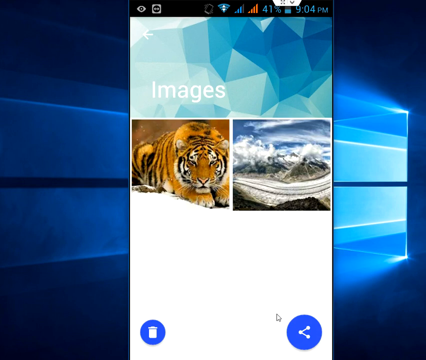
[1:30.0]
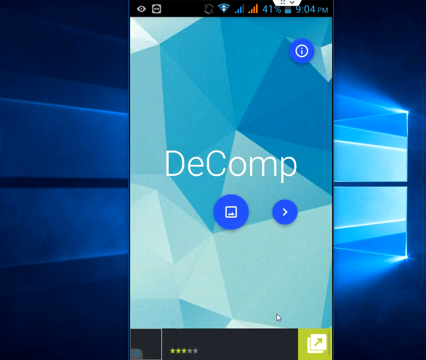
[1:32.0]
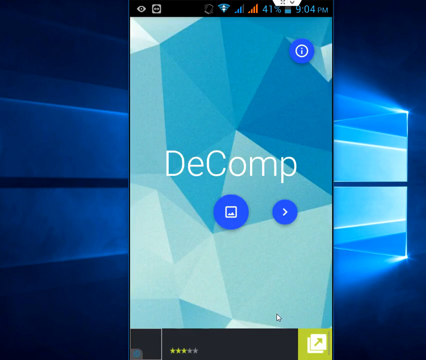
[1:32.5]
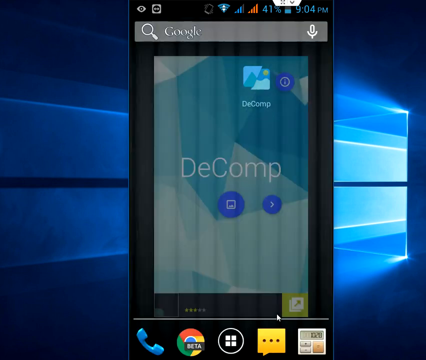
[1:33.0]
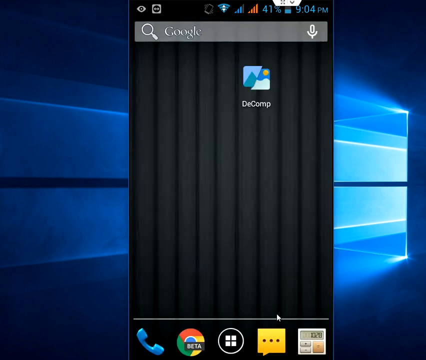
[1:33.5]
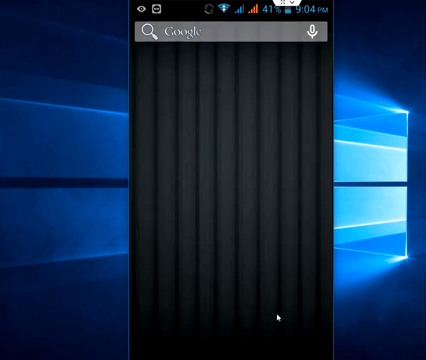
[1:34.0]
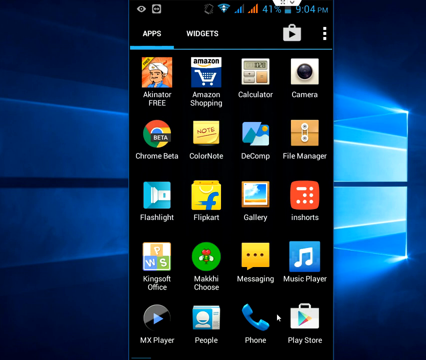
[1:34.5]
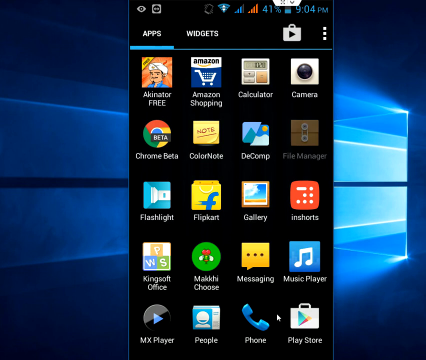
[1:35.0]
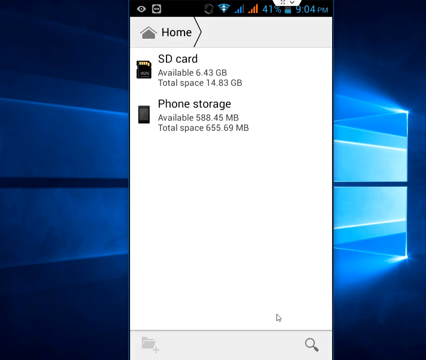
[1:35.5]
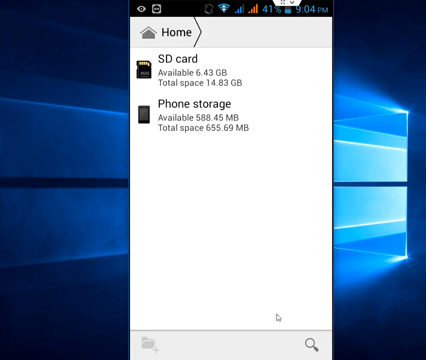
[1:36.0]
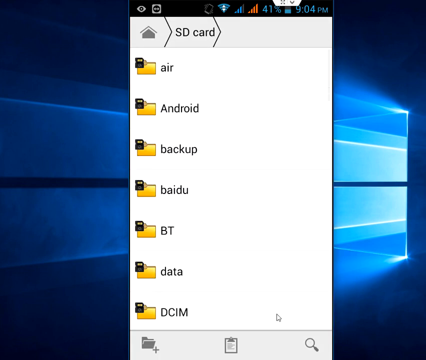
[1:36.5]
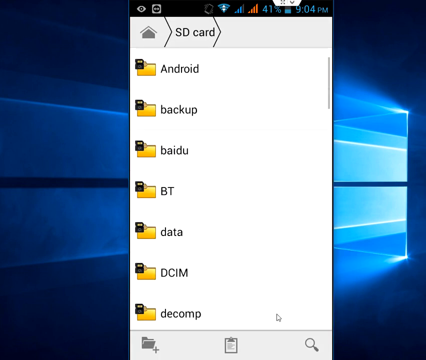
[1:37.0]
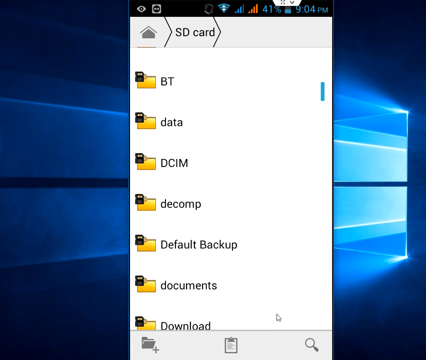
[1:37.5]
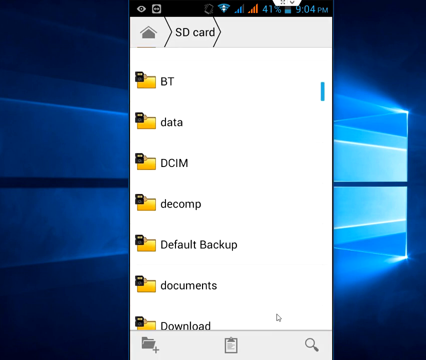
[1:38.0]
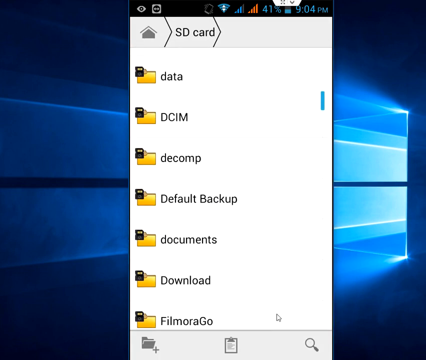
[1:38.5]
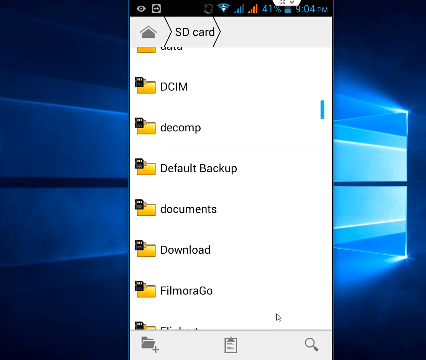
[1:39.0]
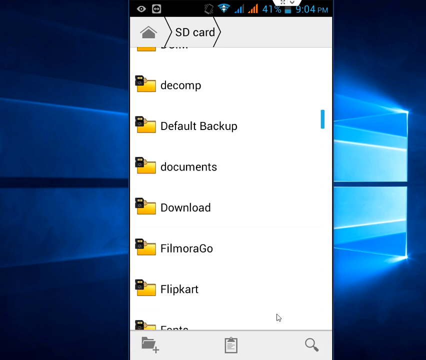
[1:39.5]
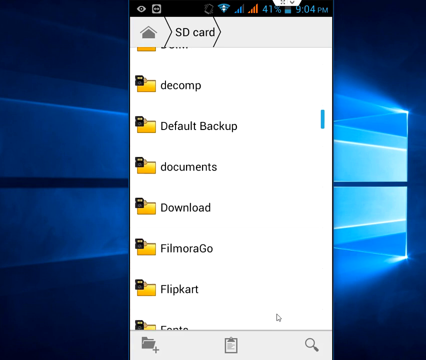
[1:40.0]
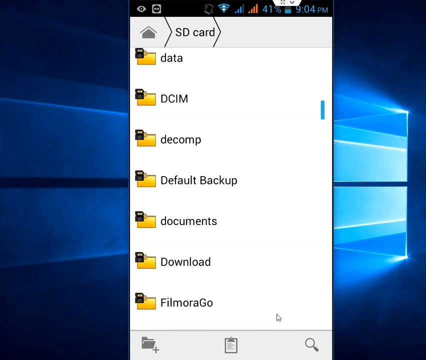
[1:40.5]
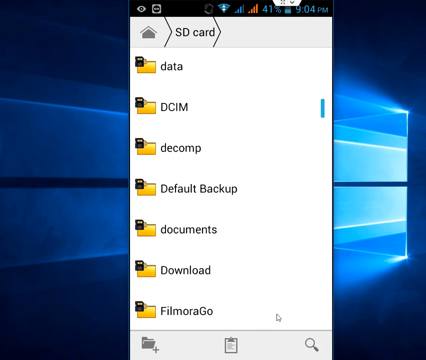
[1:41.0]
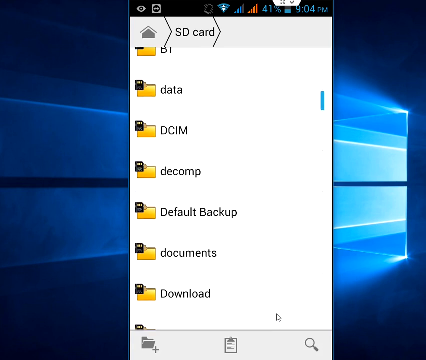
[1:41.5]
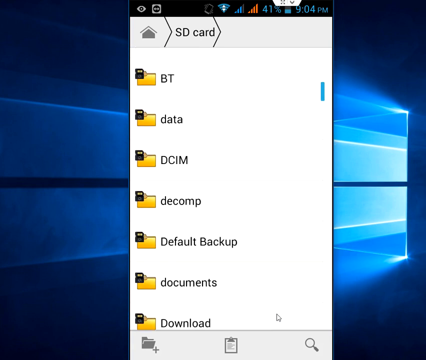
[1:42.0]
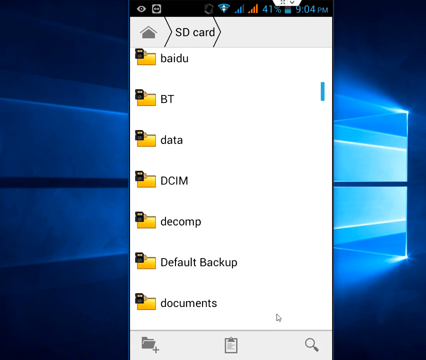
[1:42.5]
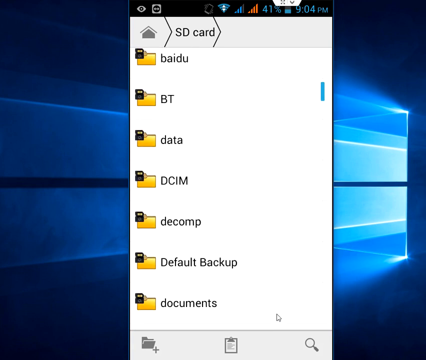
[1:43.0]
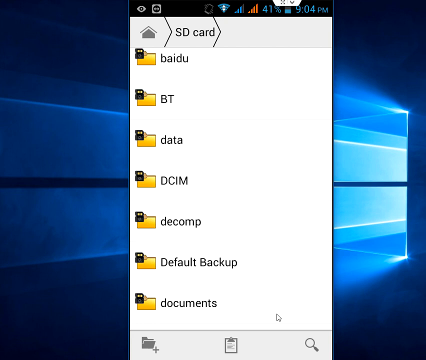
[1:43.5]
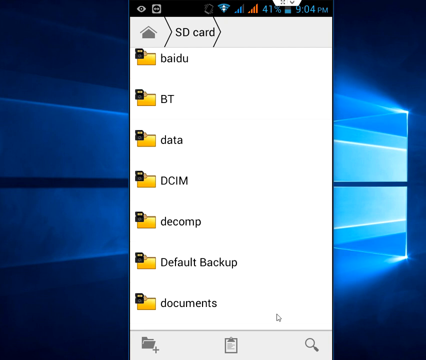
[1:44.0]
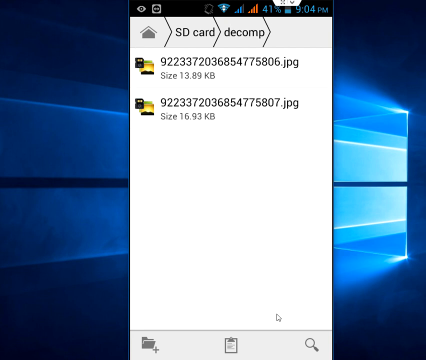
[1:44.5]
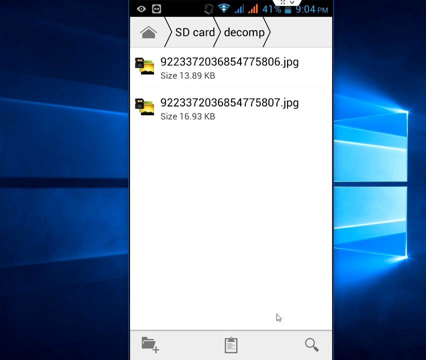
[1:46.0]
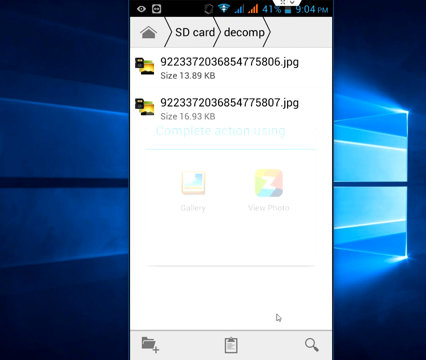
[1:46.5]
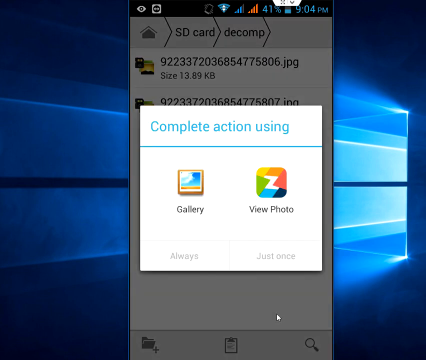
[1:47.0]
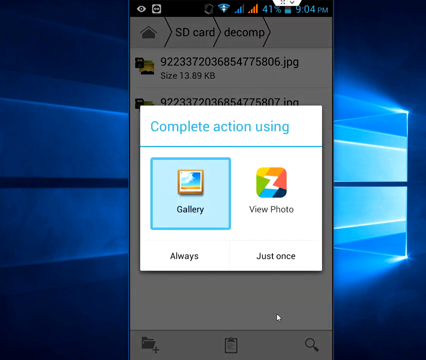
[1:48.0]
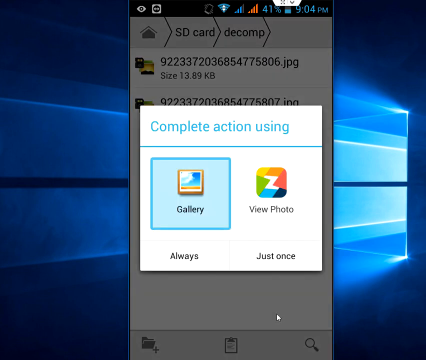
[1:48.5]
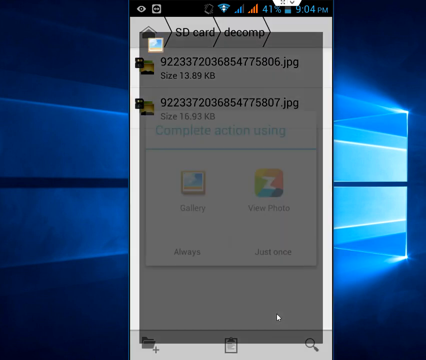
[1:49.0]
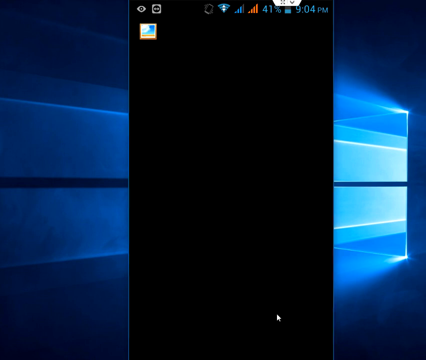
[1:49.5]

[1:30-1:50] The lion and landscape images are on the images page, with a trash icon button in the lower left corner and a share icon button in the lower right corner, both circles. At 9:04 pm, the user seems to click off DComp, goes to the main gallery menu, clicks on file manager, scrolls down to where it says SD card, and clicks on DComp. The path reads home, SD card. The user clicks the first item, "9223372036854775806.jpg", size 13.89 kb. A pop-up says "complete action using" with two options, gallery and view photo; the user picks gallery, then chooses "just once" over "always". The lion image opens in the gallery.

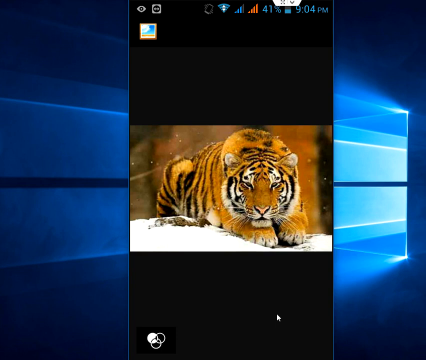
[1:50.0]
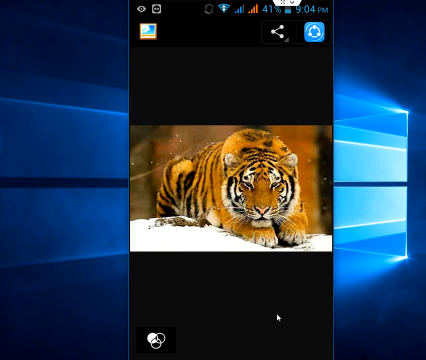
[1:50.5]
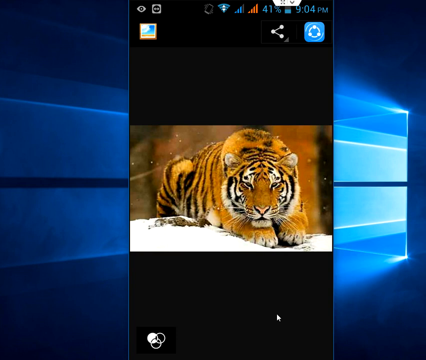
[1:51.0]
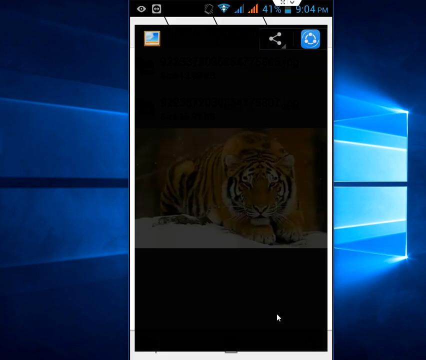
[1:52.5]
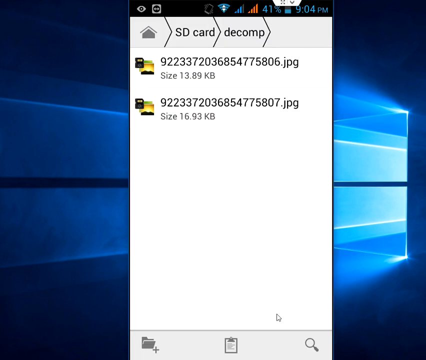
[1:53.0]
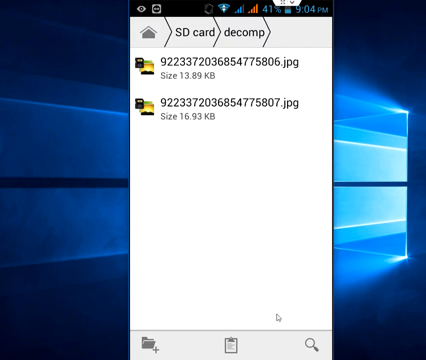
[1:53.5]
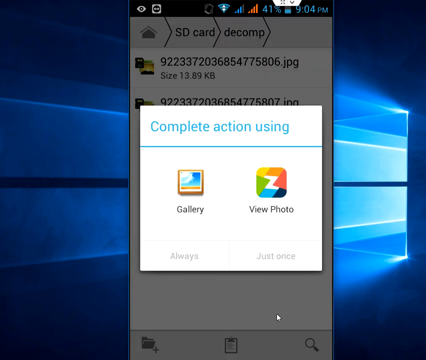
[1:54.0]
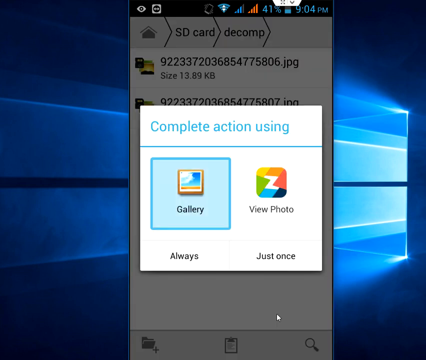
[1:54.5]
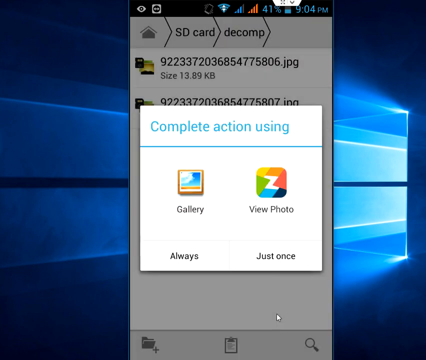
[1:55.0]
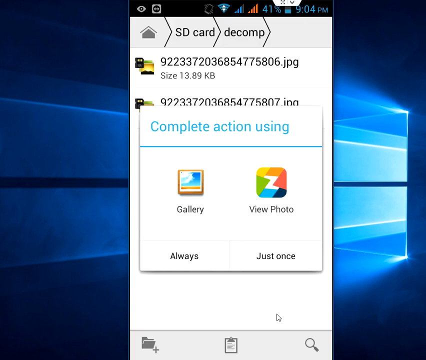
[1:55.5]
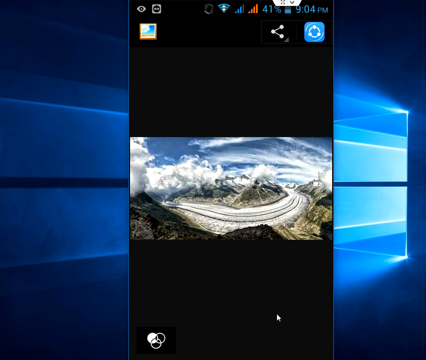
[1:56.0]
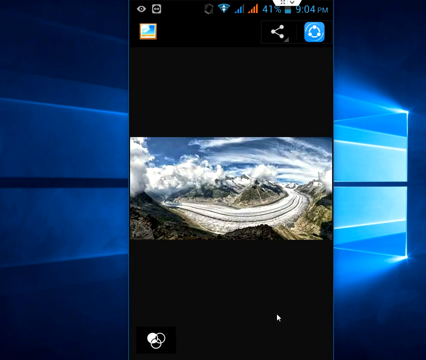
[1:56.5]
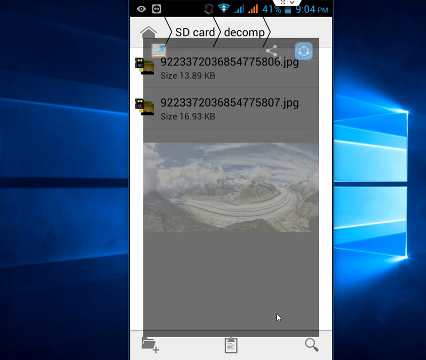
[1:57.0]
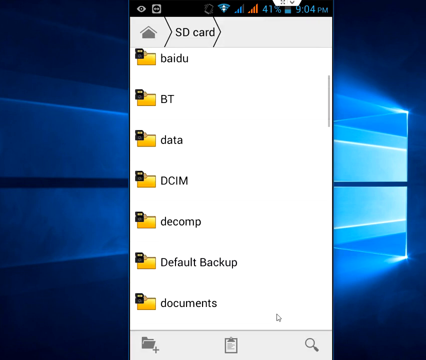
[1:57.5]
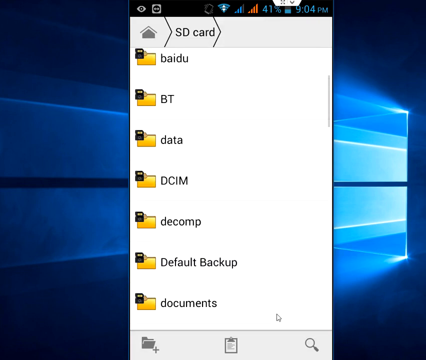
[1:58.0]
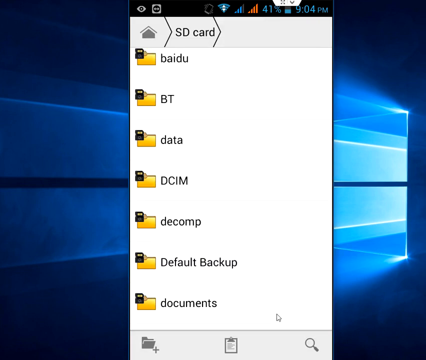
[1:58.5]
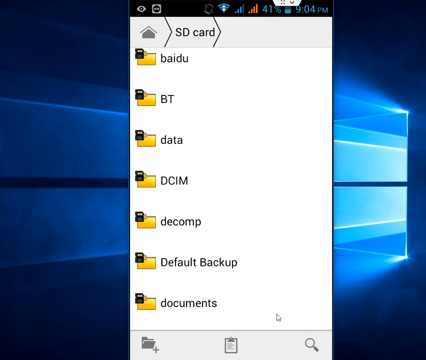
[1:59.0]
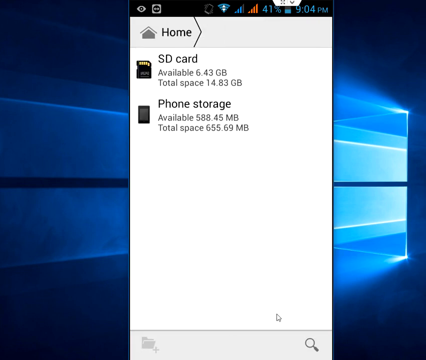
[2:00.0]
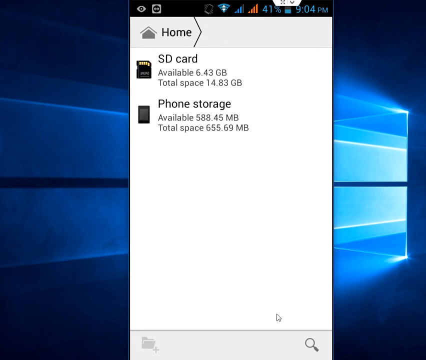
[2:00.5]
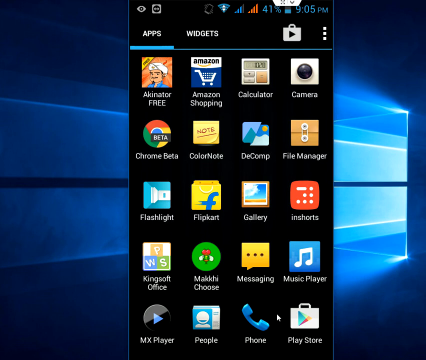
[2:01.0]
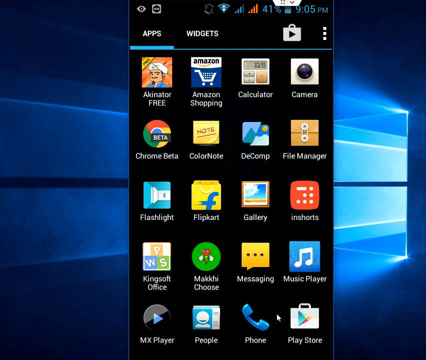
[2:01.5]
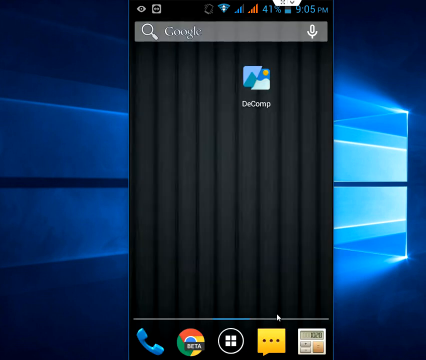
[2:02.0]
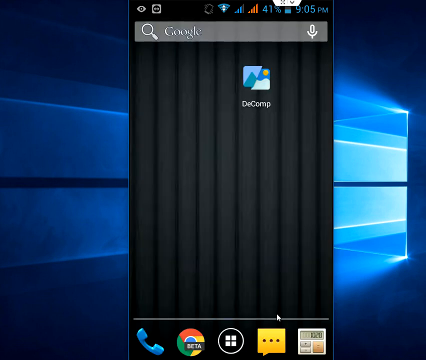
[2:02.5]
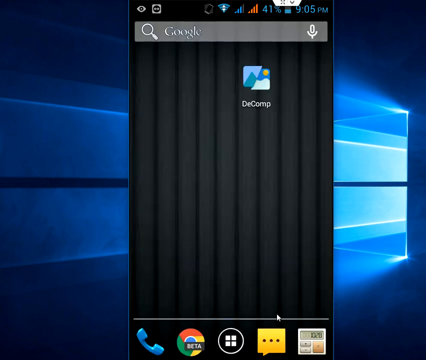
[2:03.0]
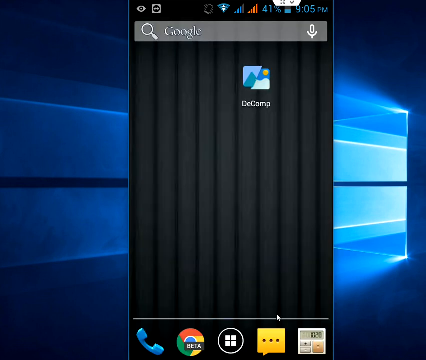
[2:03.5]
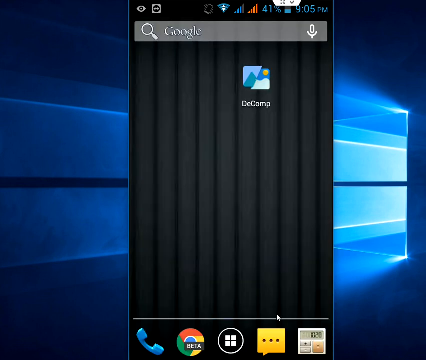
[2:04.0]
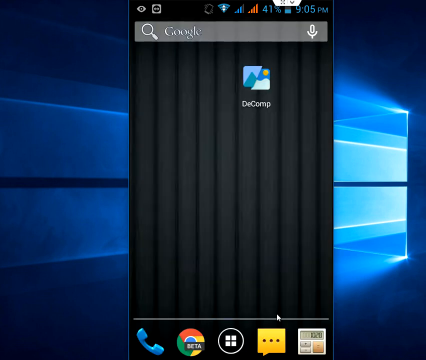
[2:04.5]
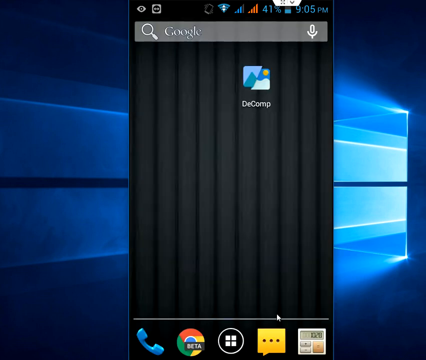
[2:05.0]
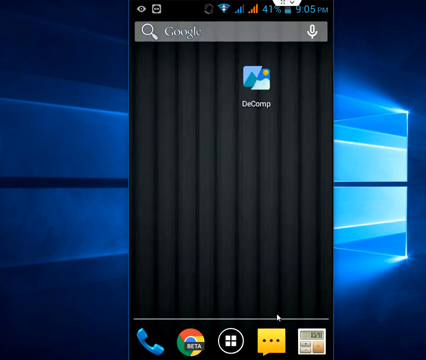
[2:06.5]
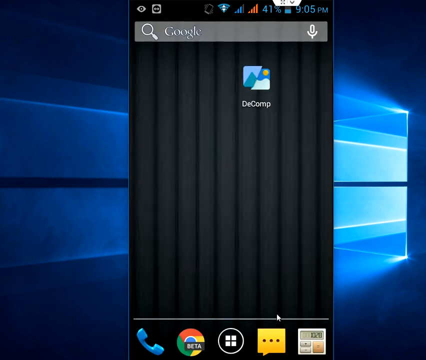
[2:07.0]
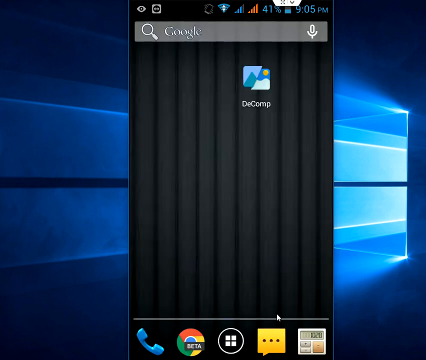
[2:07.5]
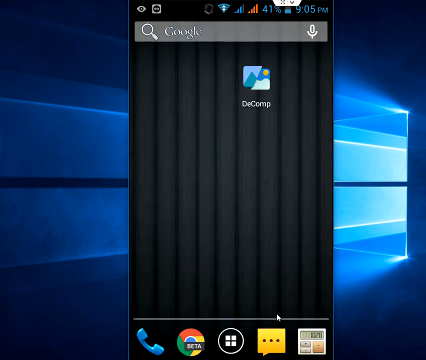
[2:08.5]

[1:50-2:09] The lion picture is on the screen in the gallery. The user clicks off it and clicks the second item below it, "9223372036854775807.jpg". The "complete action using" prompt offers gallery or view photo, and gallery is selected; this time neither always nor just once is clicked. The landscape image opens. The user goes back to the SD card page and then back to home without clicking anything inside the SD card. The home page shows the SD card with 6.43 GB available of 14.83 GB total space, and home storage with 588.45 MB available of 655.69 MB total space. The user then clicks off and returns to the phone's home screen, the same page shown at the start, with the Decomp app at the top.